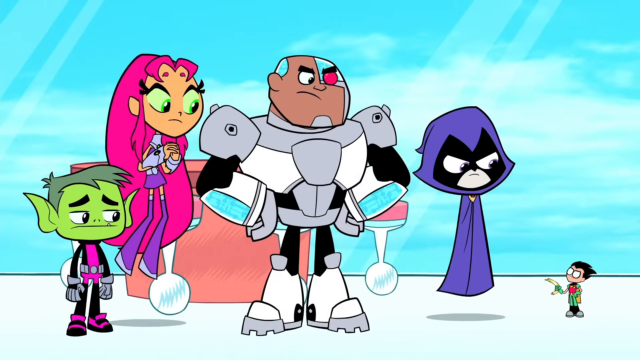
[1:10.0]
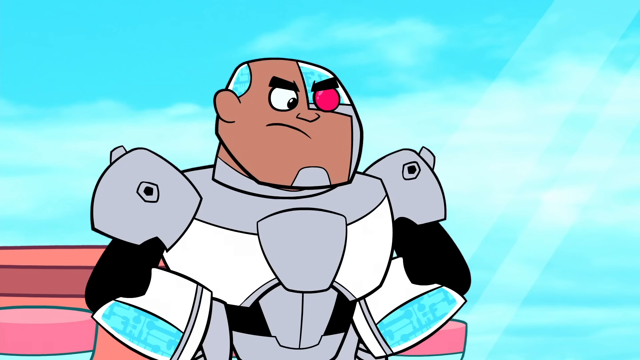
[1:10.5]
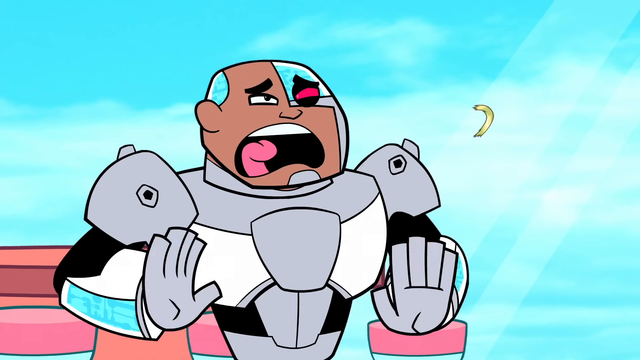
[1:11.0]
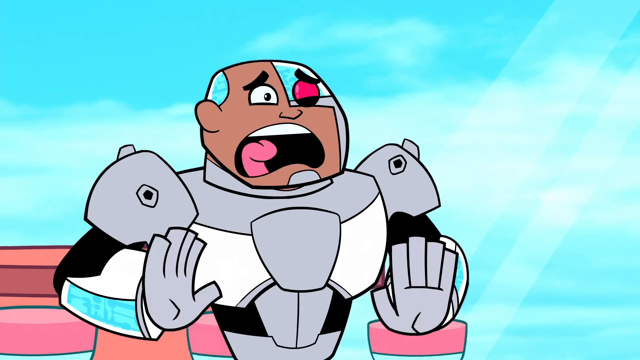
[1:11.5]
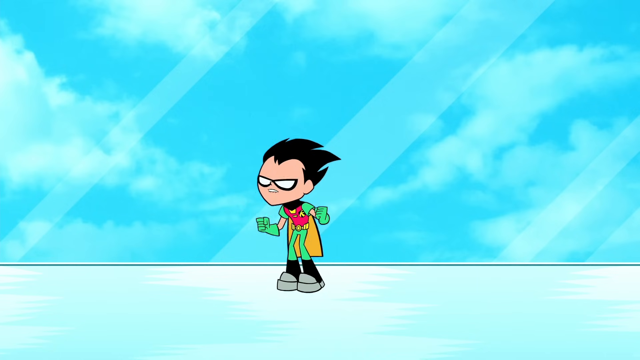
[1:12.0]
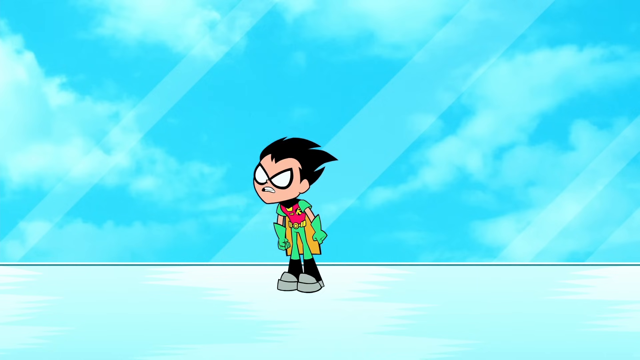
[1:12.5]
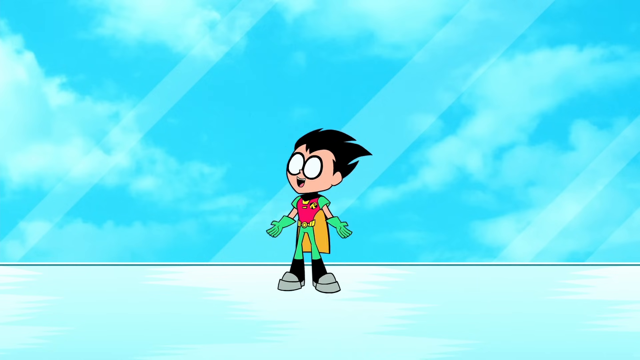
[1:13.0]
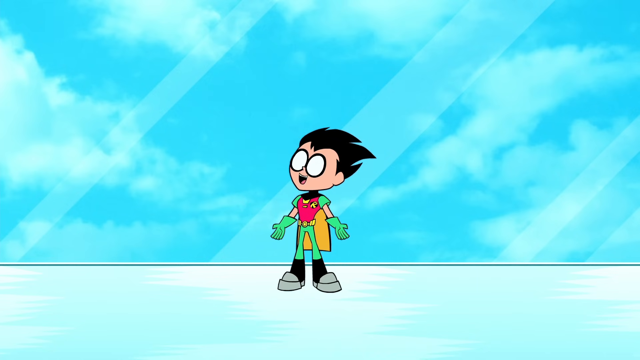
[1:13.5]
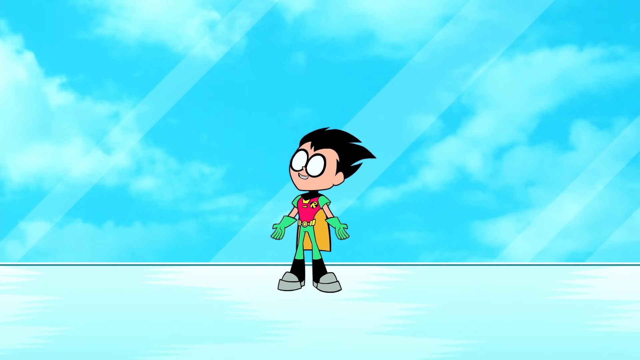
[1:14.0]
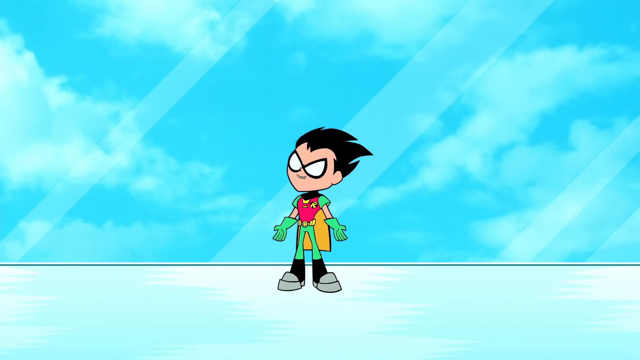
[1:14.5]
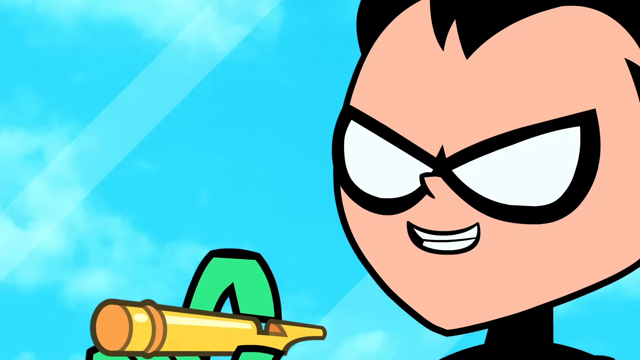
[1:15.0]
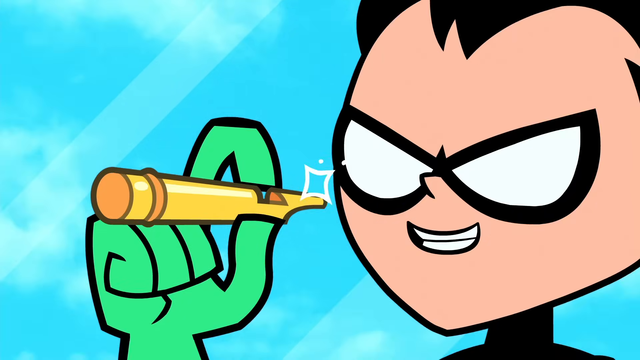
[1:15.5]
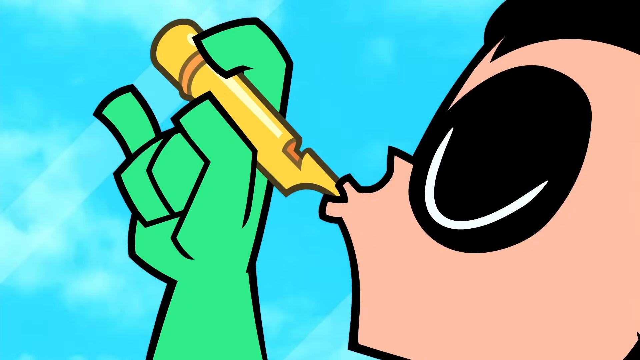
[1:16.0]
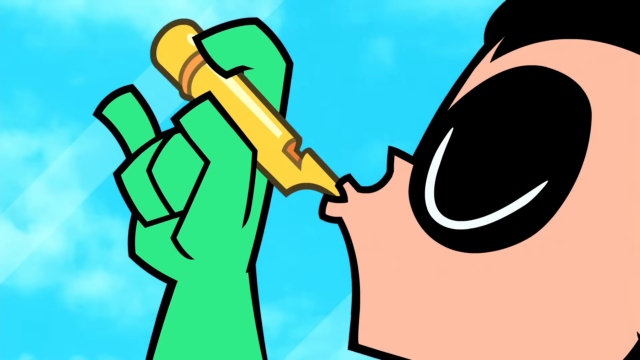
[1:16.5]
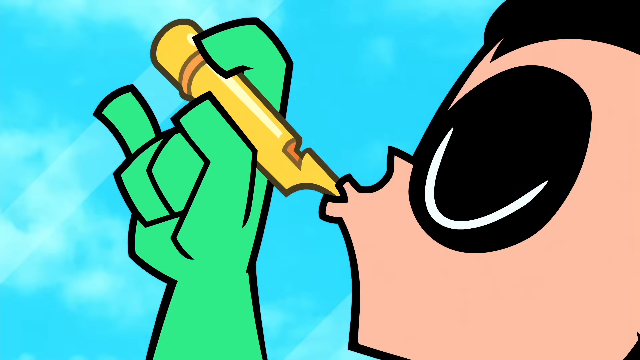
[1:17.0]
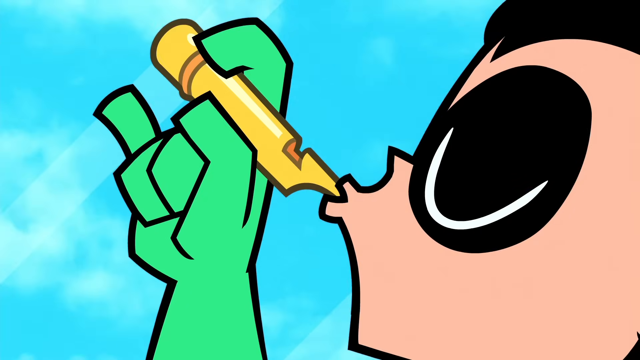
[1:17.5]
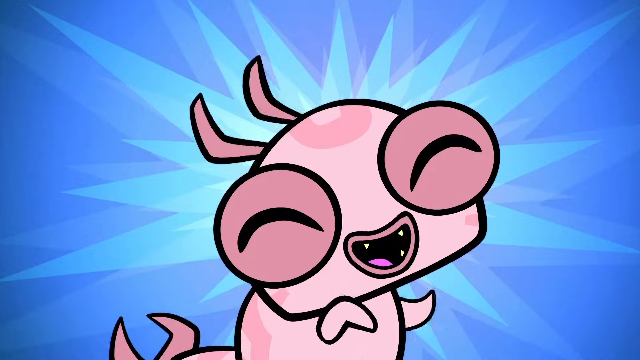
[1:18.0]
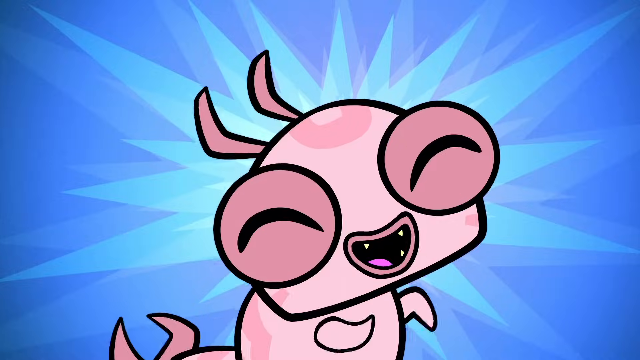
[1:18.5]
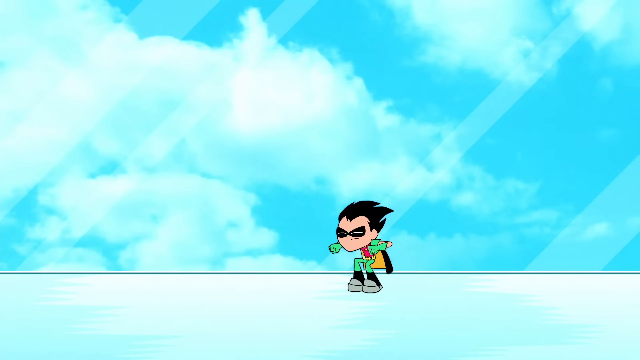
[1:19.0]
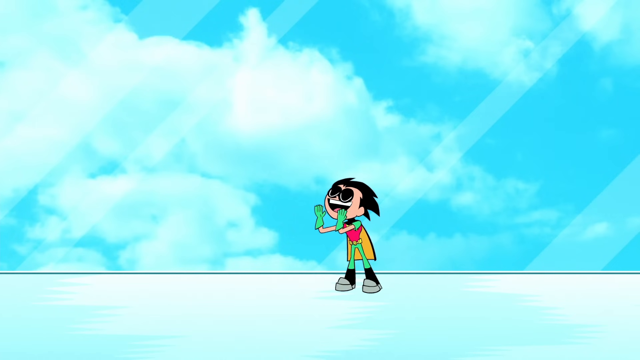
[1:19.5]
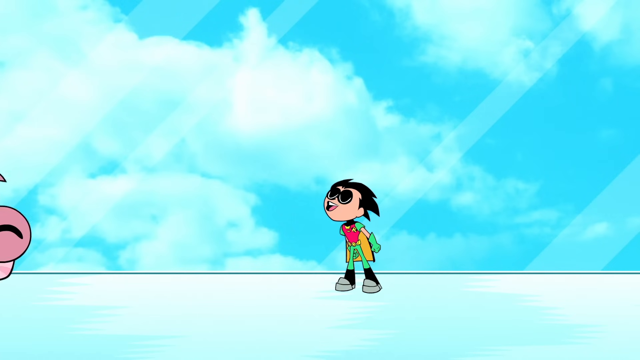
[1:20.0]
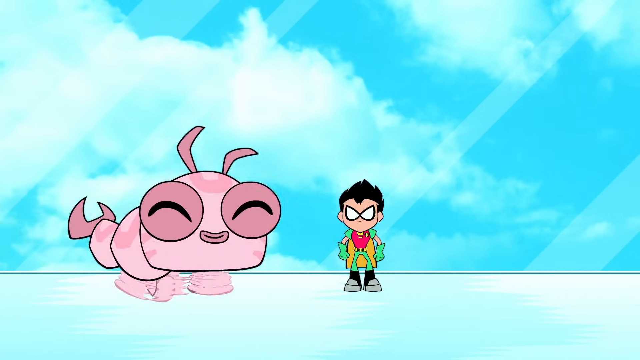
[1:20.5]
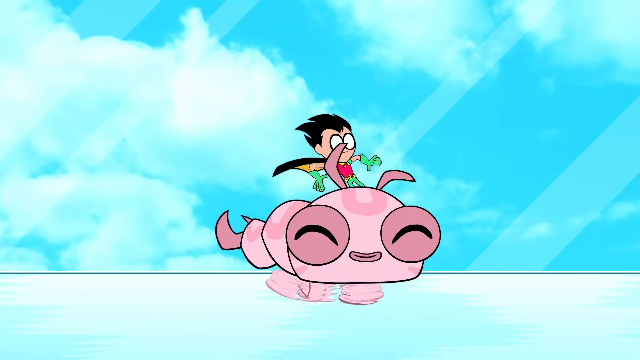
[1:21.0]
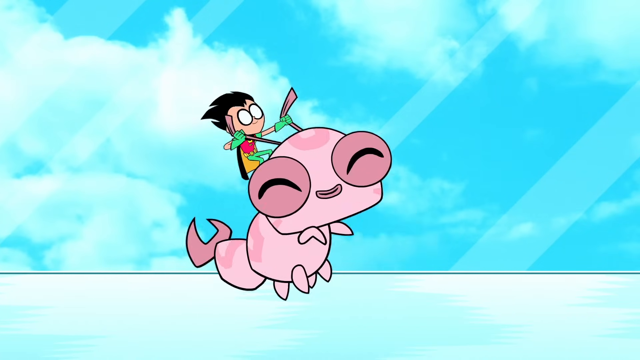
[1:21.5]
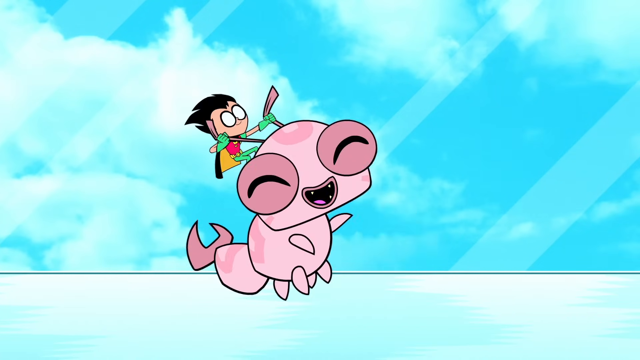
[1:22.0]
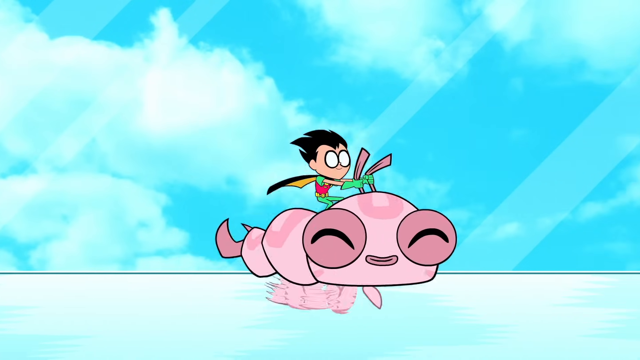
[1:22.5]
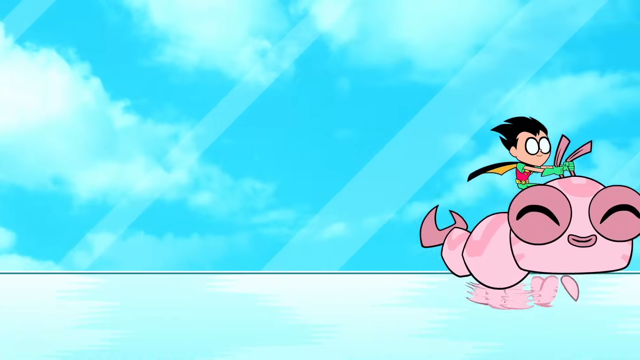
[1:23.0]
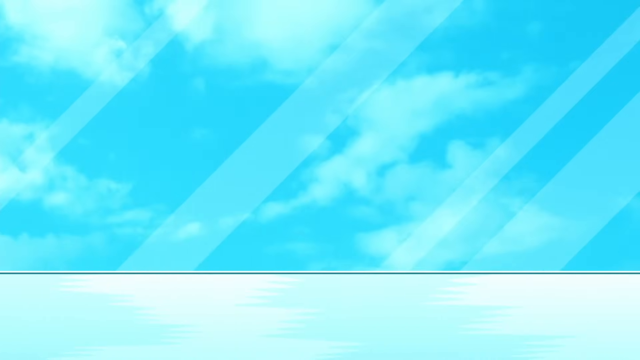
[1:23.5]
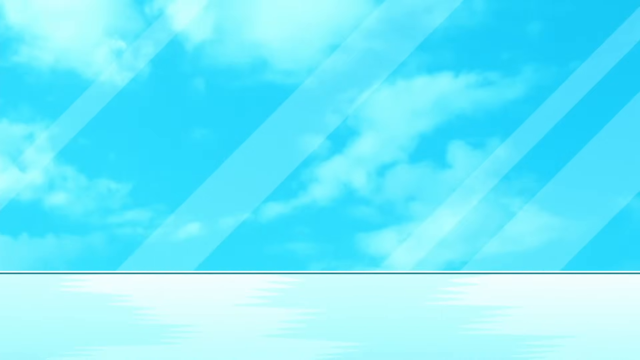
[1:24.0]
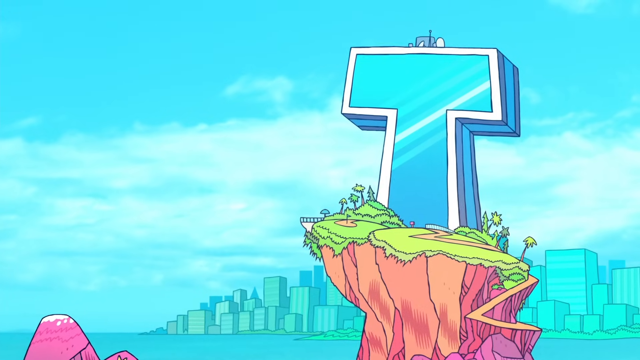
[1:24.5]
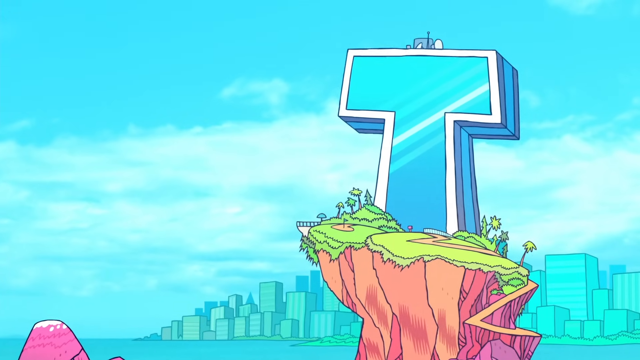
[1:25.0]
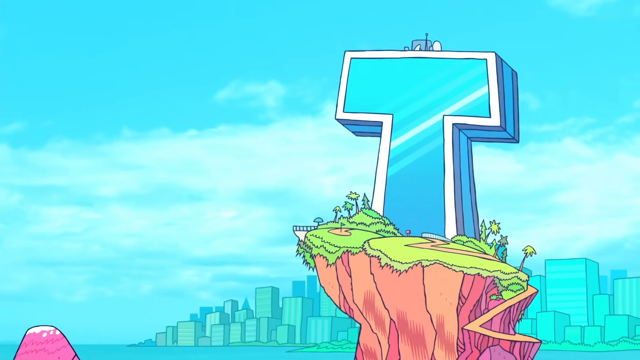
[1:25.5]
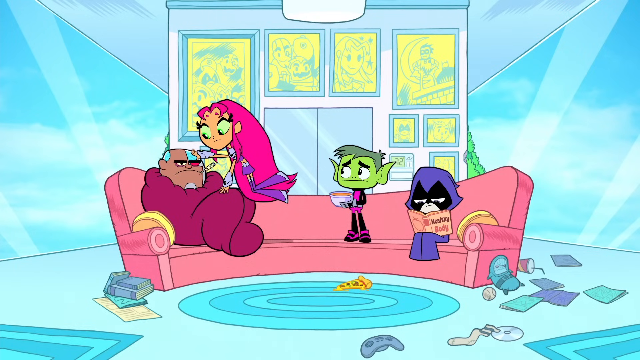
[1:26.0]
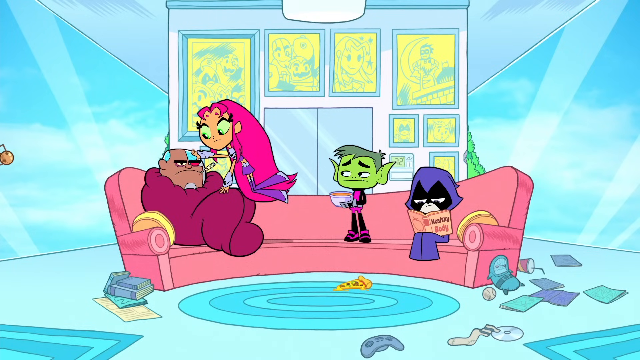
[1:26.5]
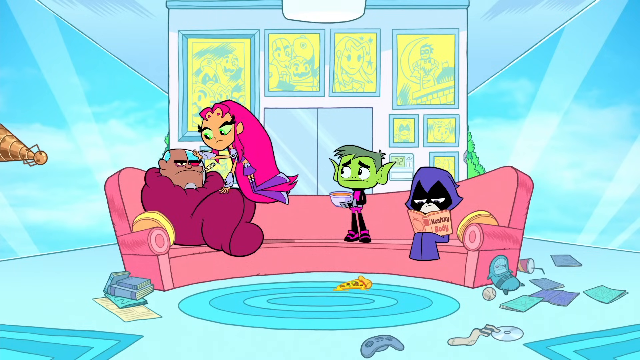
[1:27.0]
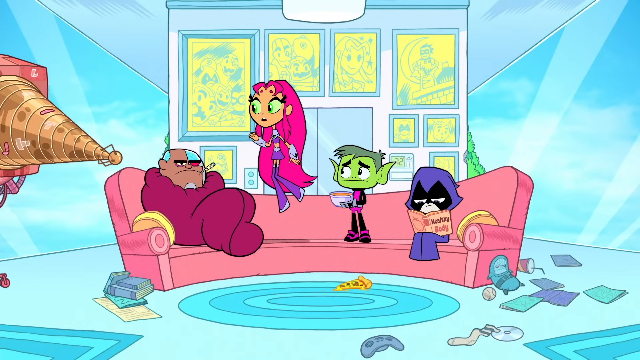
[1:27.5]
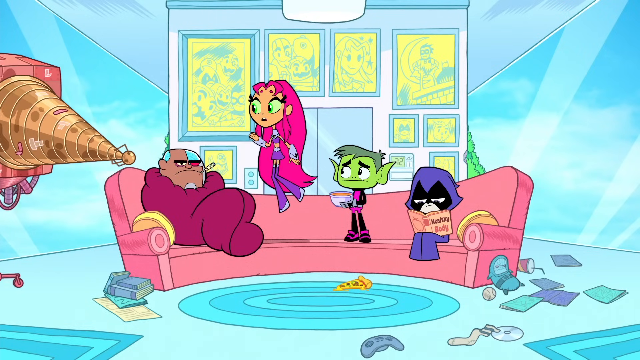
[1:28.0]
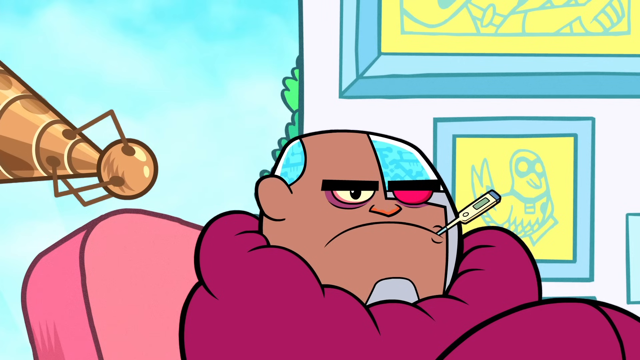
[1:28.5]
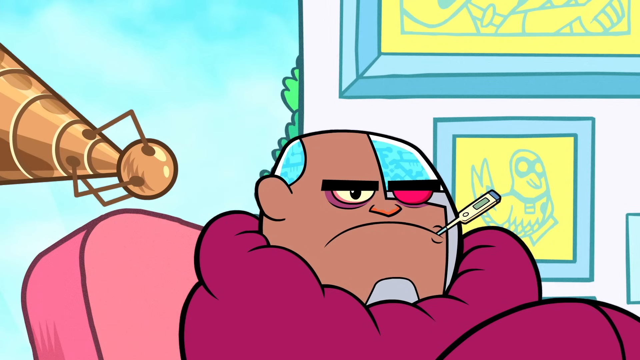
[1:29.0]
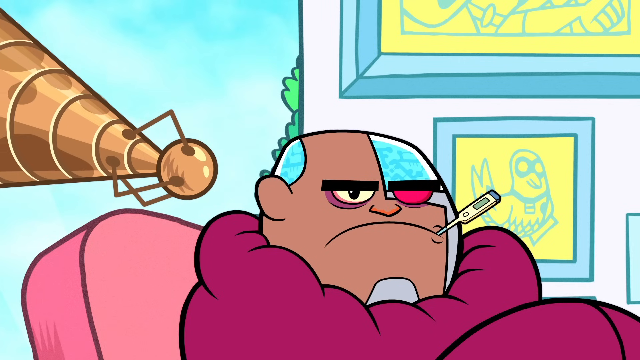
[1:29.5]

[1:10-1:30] All the Teen Titans are gathered, talking to the very tiny Robin, who is down below them. He appears to be holding the toenail he used as a boomerang. Beast Boy, Raven, Starfire and Cyborg stand next to him, looking down at him, and they look maybe angry at him: Raven and Cyborg both have kind of angry looks on their faces while Starfire and Beast Boy look on. Robin throws the toenail at Cyborg, and it bounces off him. A close-up shows Robin speaking. Robin pulls out what looks to be a golden whistle and blows into it, and some sort of pink creature, apparently a bug, runs out. Robin hops on top of it and rides away on it, apparently using it as transportation, like a horse.